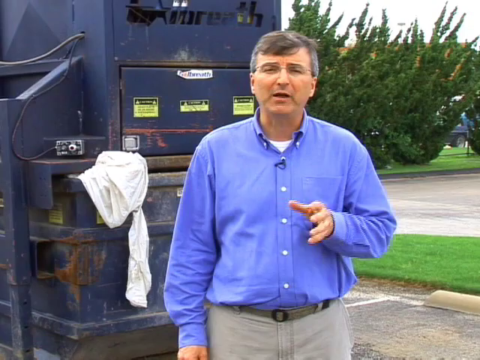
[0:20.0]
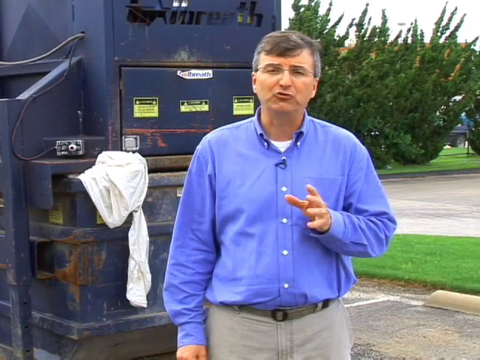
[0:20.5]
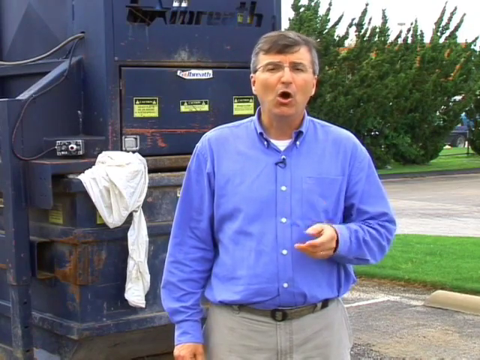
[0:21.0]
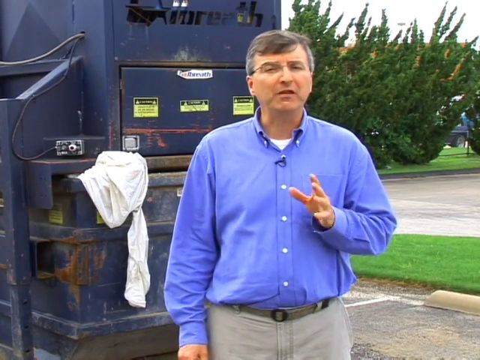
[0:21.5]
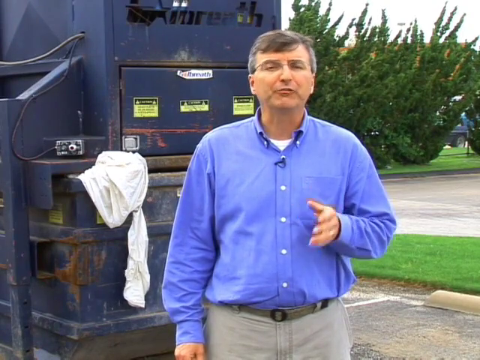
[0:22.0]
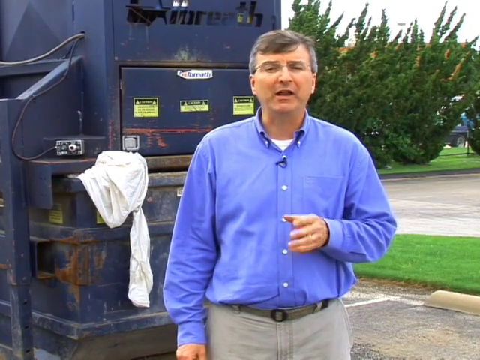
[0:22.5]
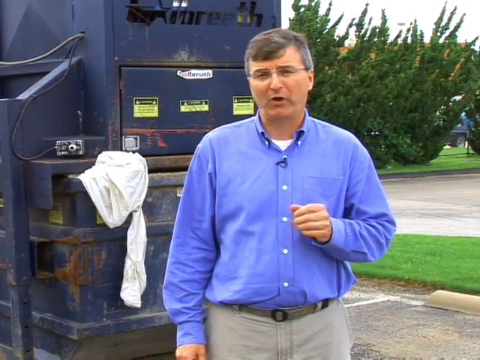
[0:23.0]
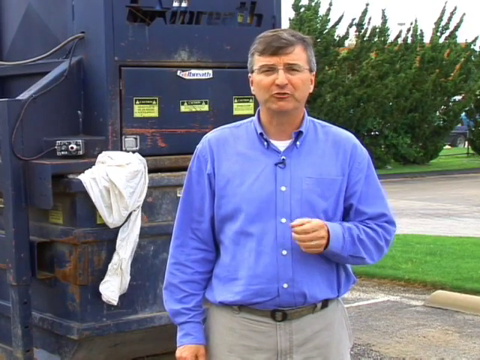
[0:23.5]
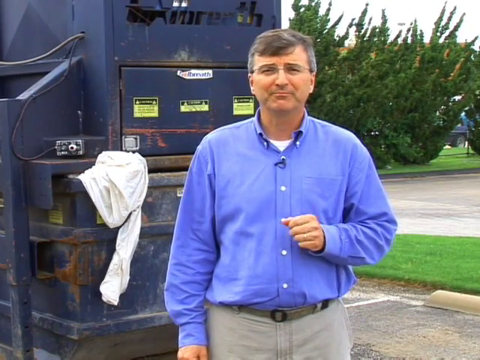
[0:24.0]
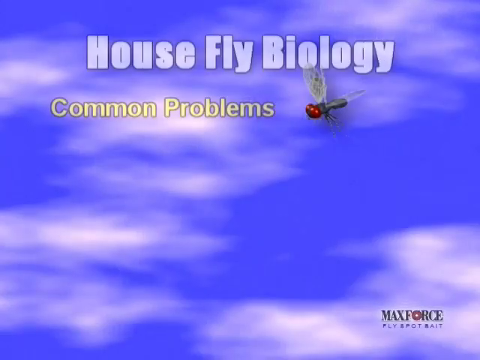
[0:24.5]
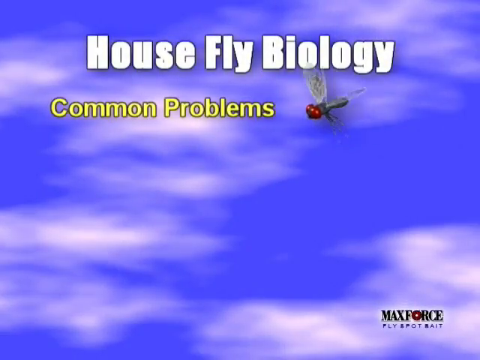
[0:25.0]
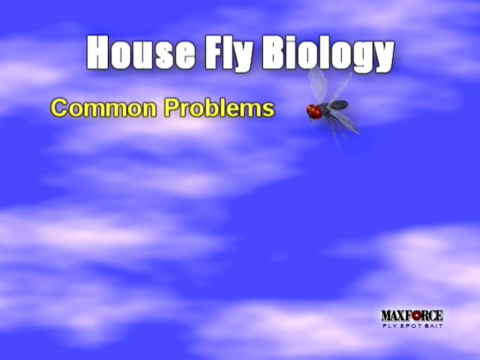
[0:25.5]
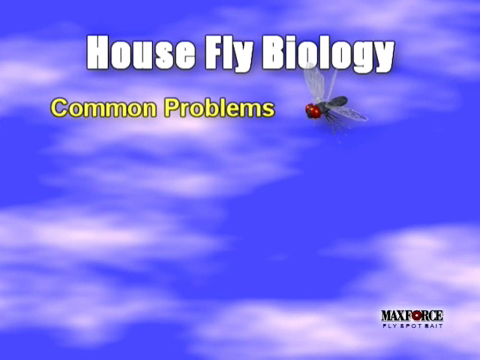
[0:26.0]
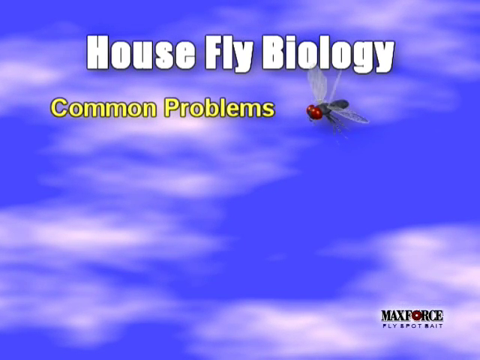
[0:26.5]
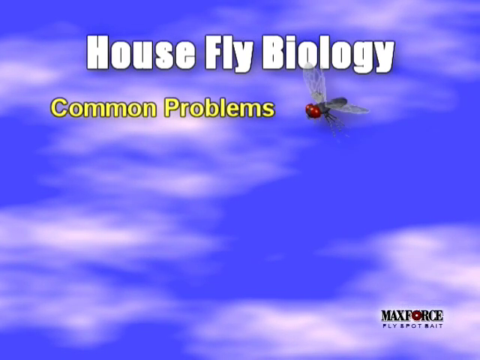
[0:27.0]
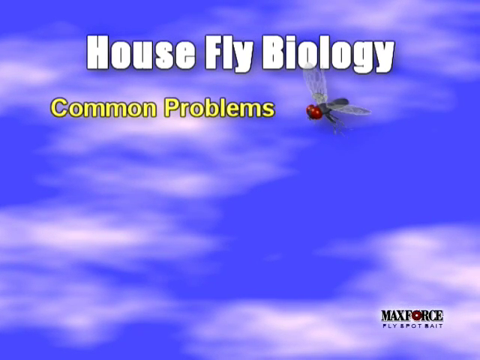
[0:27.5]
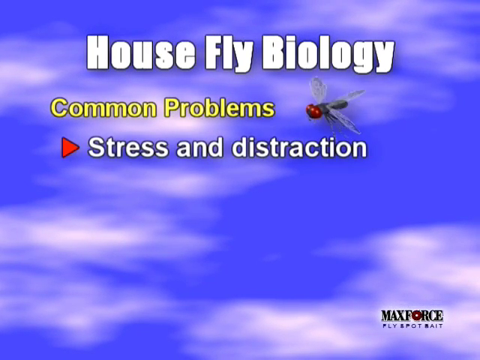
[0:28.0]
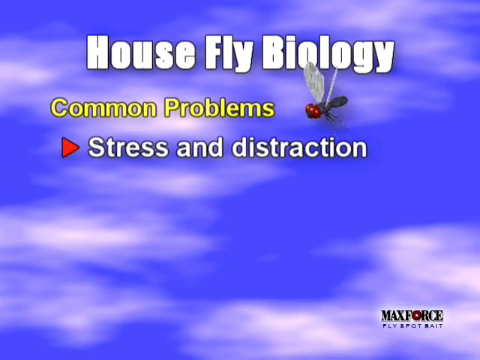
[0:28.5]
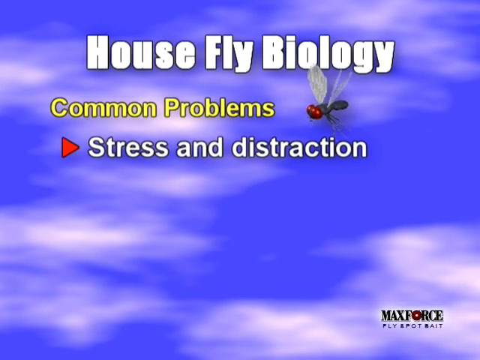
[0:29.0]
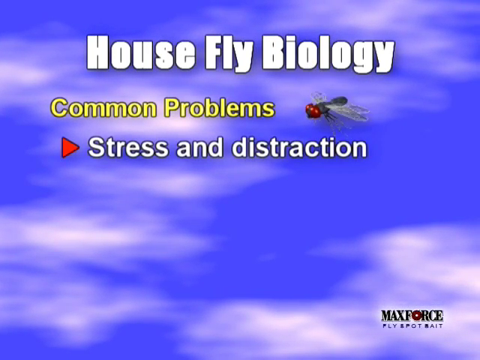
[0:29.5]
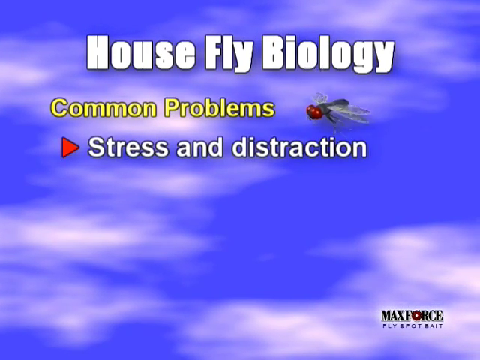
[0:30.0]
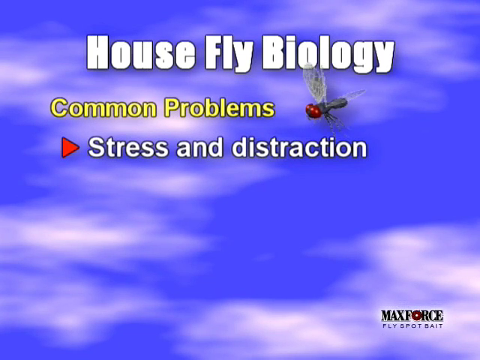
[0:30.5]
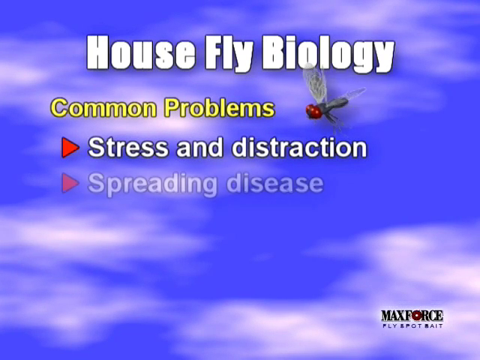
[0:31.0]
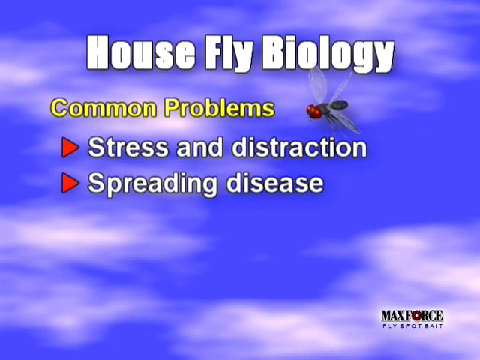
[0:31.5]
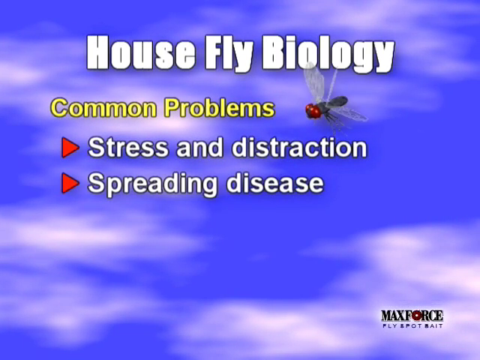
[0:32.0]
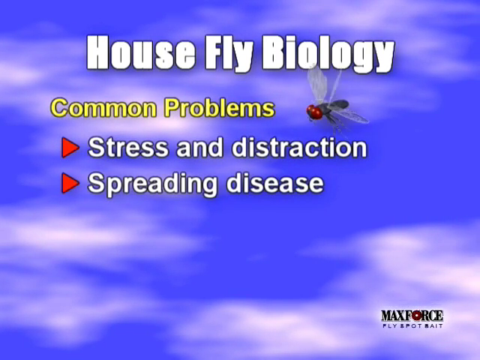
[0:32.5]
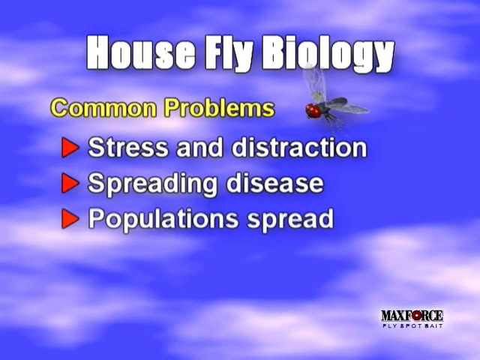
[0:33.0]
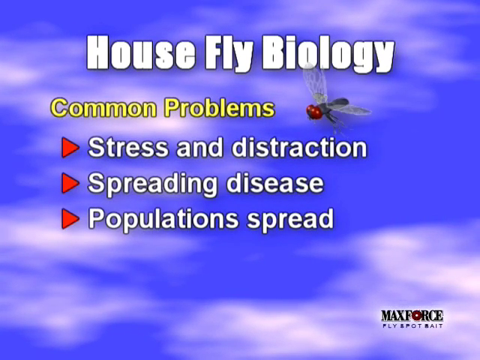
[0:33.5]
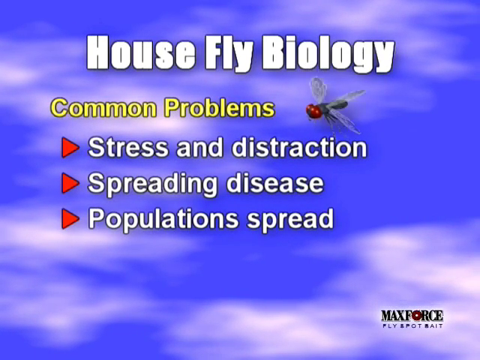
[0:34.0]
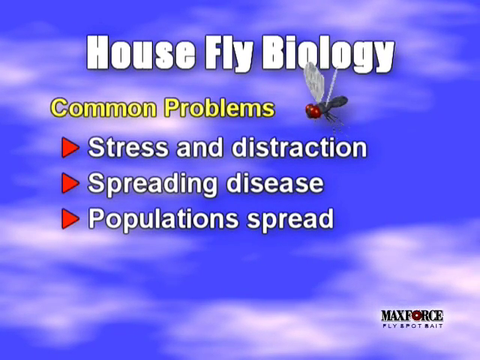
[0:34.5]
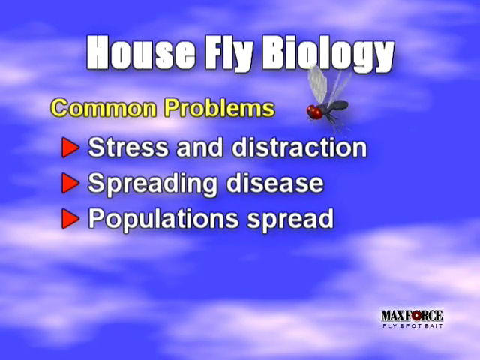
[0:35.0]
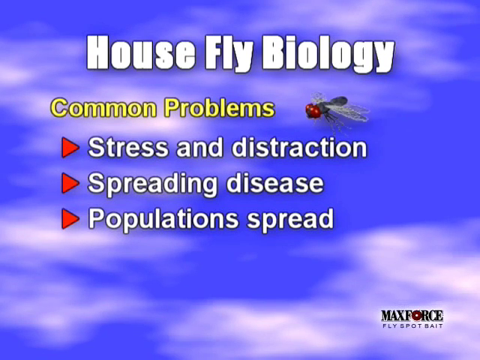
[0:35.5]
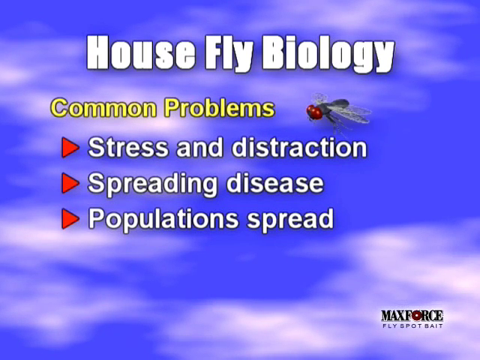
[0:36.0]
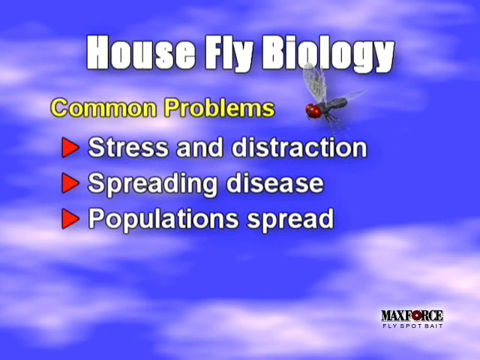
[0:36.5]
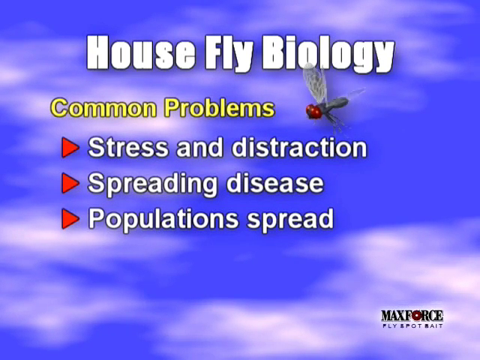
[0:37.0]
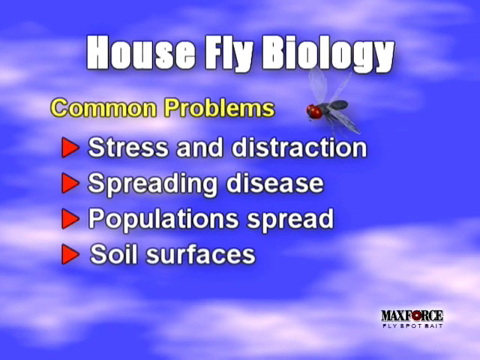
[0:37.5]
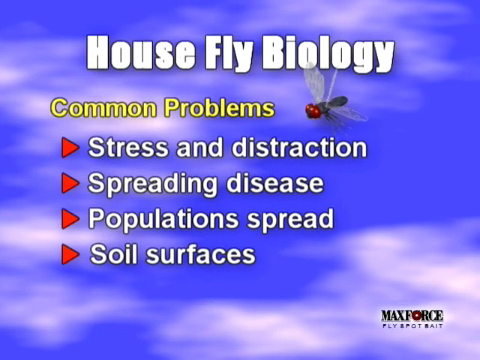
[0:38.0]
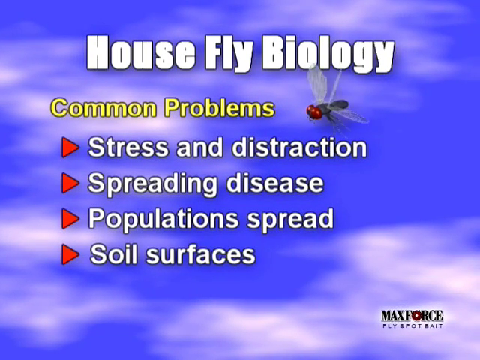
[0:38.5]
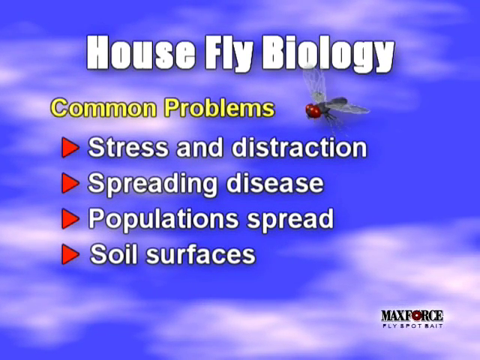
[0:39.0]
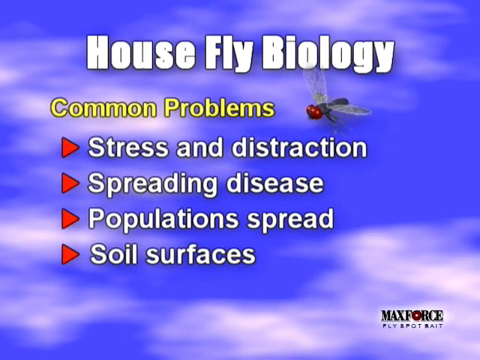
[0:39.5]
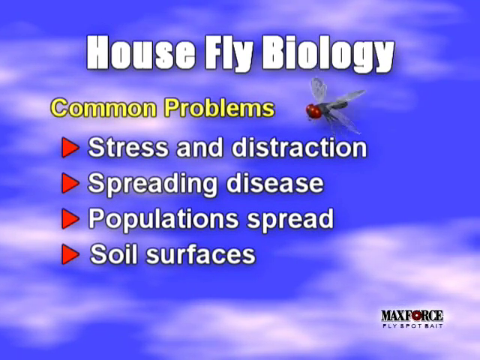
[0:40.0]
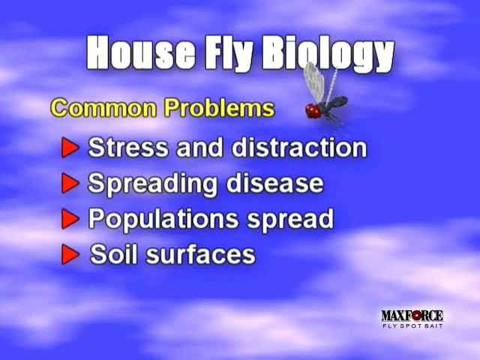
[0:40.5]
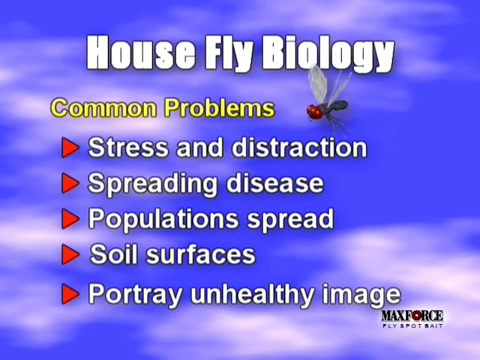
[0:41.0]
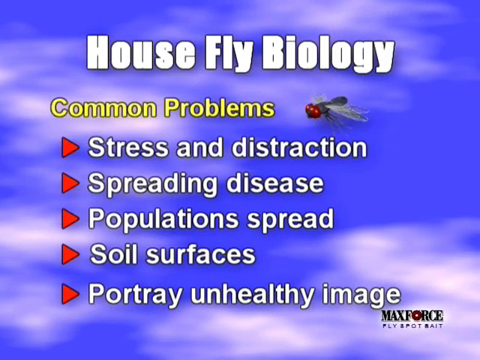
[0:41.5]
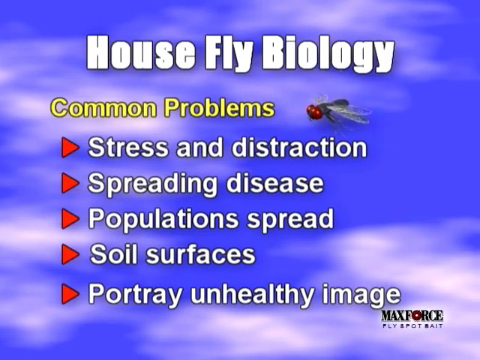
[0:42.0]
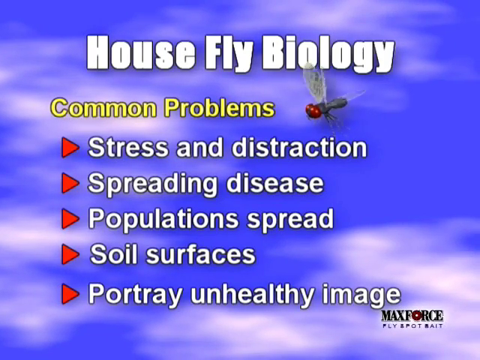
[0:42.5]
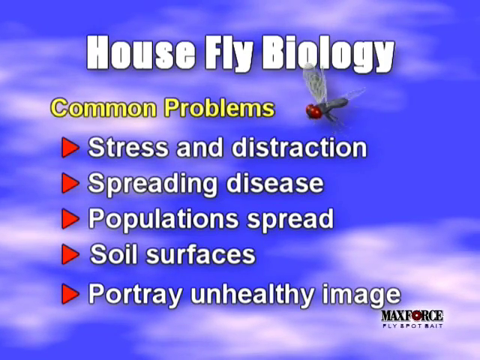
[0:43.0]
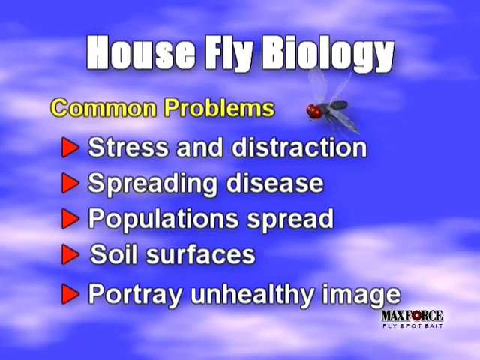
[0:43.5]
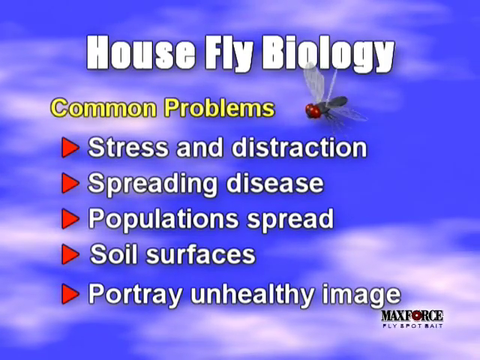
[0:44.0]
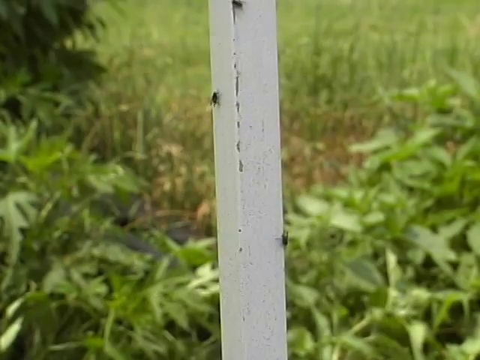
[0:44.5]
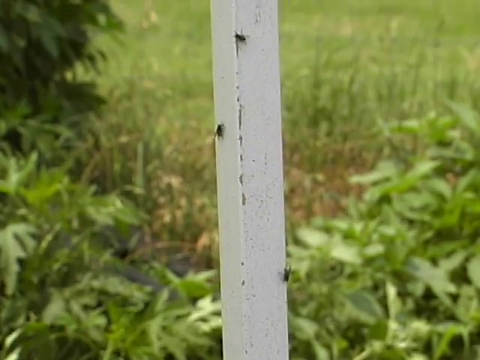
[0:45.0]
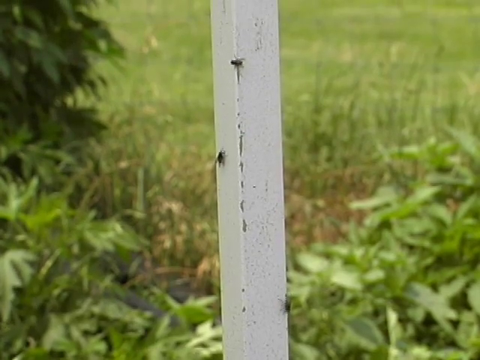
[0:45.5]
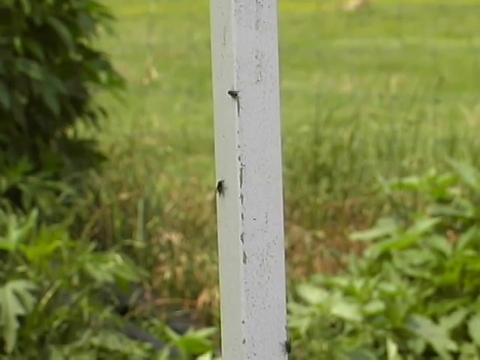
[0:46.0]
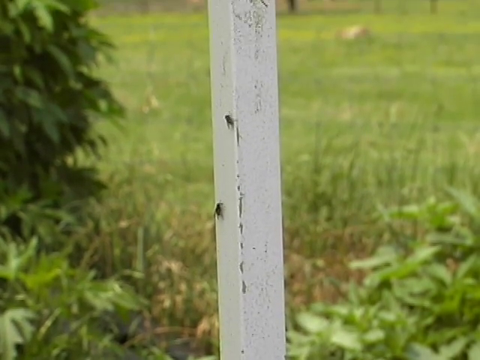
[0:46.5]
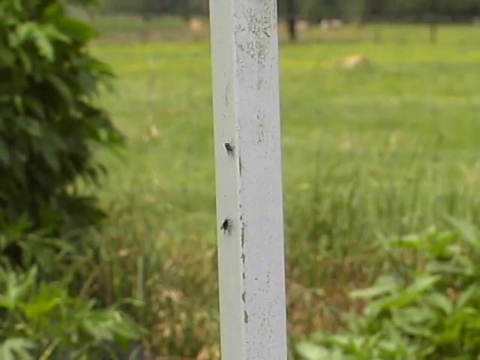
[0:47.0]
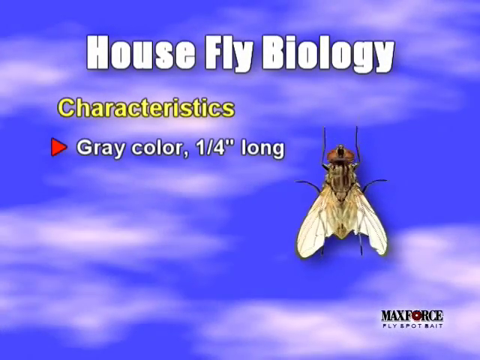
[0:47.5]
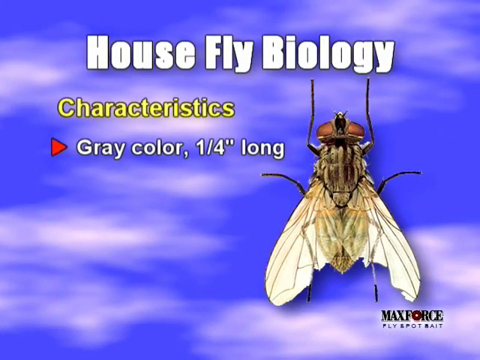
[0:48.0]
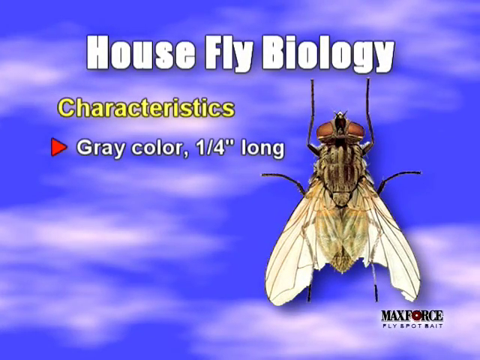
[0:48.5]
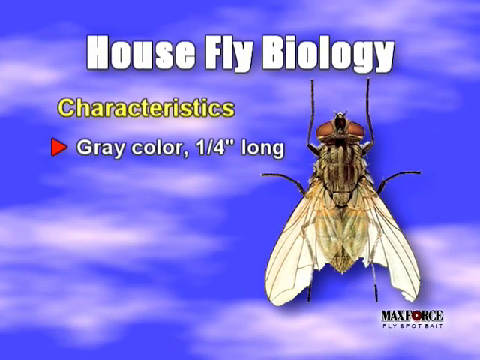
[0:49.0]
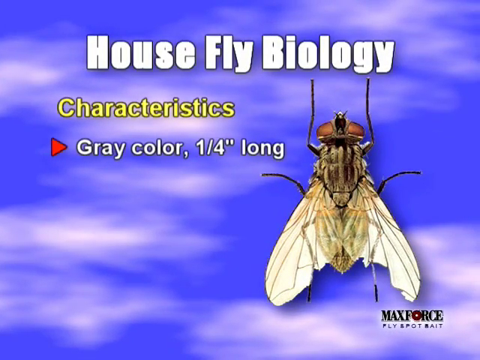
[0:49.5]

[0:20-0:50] A man speaks directly to the camera, standing in front of what looks like a large blue dumpster. Behind him on the right are some bushes and what looks like a parking lot. He wears a long-sleeved blue shirt and tan pants and gestures with his left hand. After a few seconds the screen switches to a background with text over it. At the top it says "House Fly Biology," with an animated graphic of a fly moving its wings just below. Under this it says "Common Problems," and bulleted items appear one by one: "Stress and Distraction," "Spreading Disease," "Populations Spread," "Soil Surfaces," and "Portray Unhealthy Image." Next, the camera moves up a white wooden post on which two flies are crawling. The screen then changes back to the backdrop that looks like clouds and a sky, this time with a large graphic of a housefly on the right. At the top it says "House Fly Biology," and below that "Characteristics." The first item listed is "Gray Color, 1/4" long."